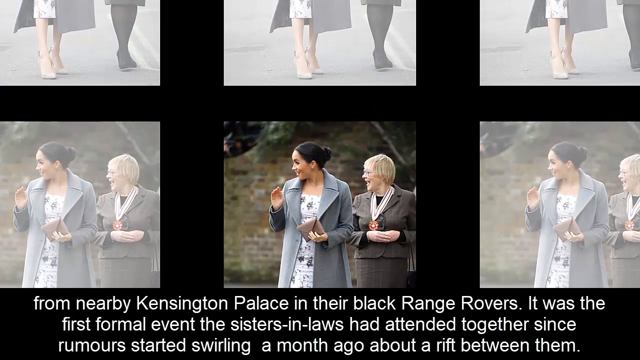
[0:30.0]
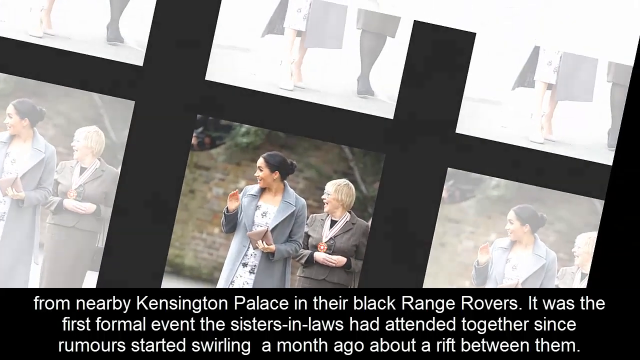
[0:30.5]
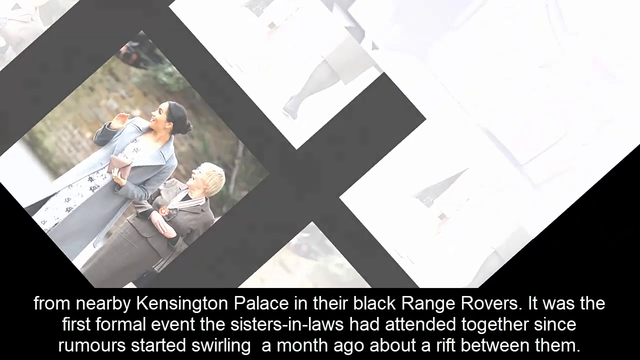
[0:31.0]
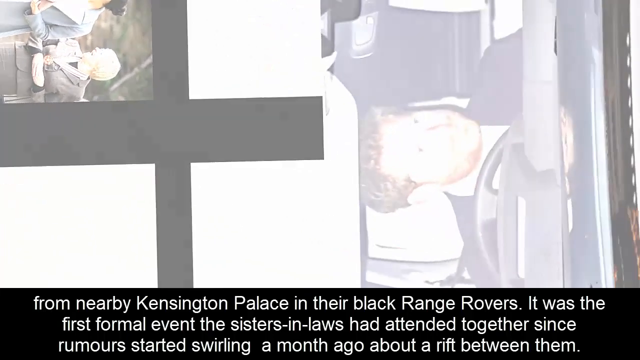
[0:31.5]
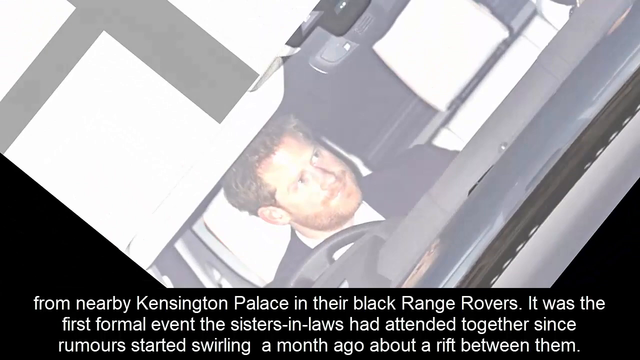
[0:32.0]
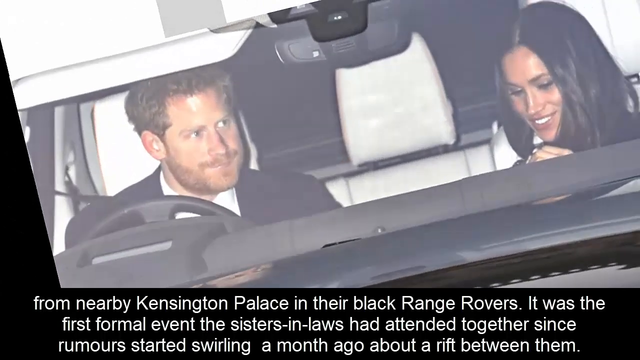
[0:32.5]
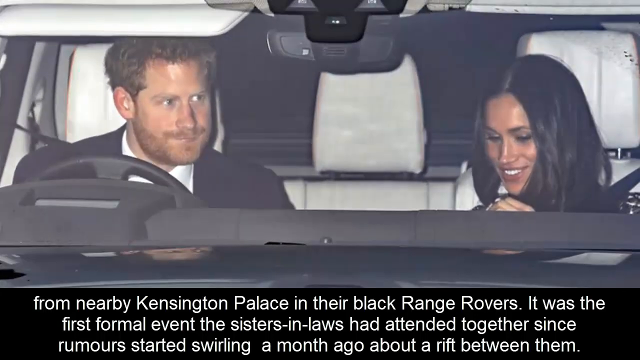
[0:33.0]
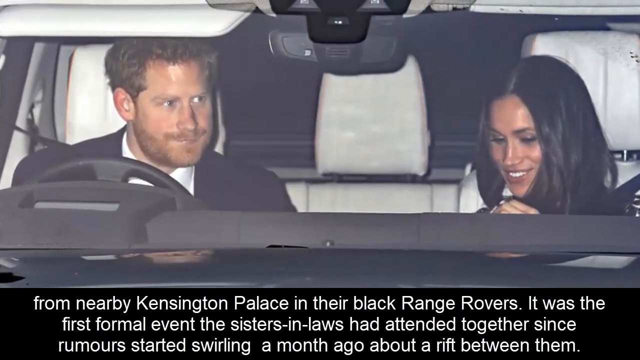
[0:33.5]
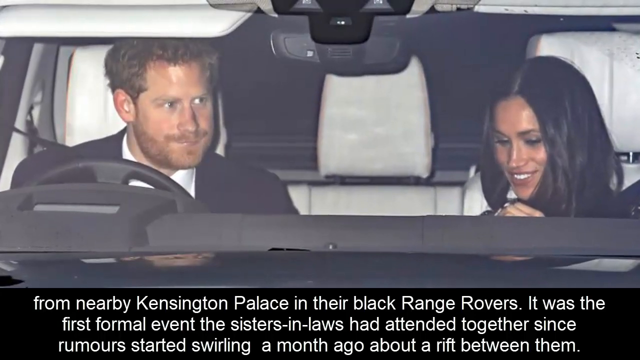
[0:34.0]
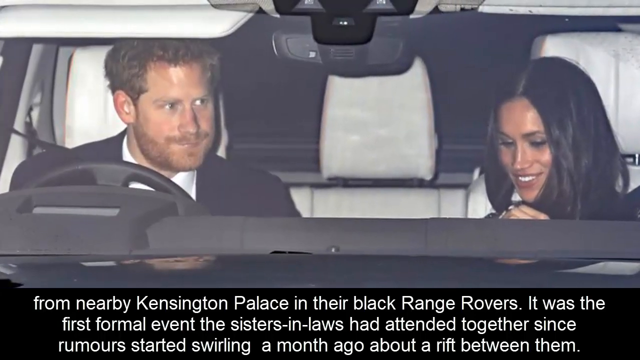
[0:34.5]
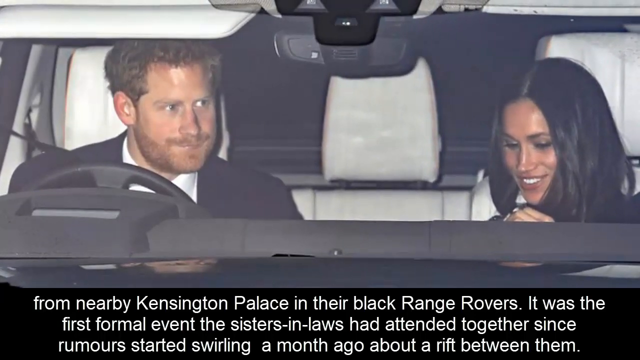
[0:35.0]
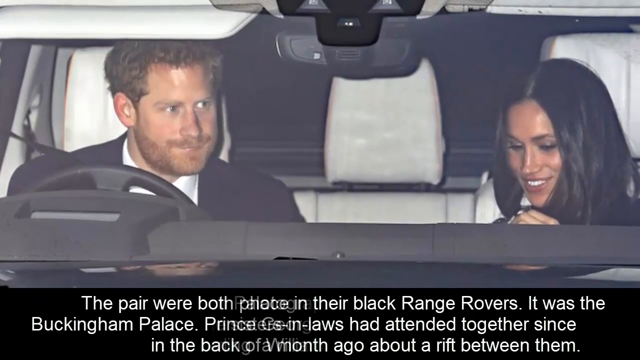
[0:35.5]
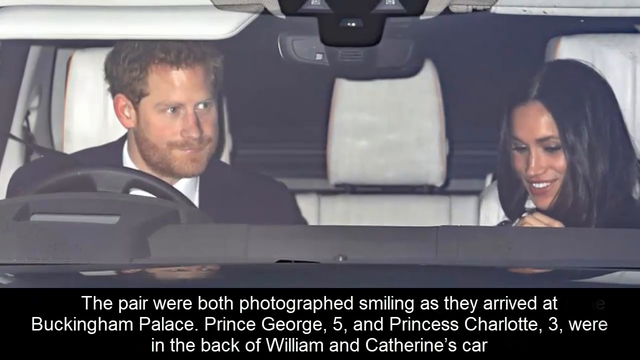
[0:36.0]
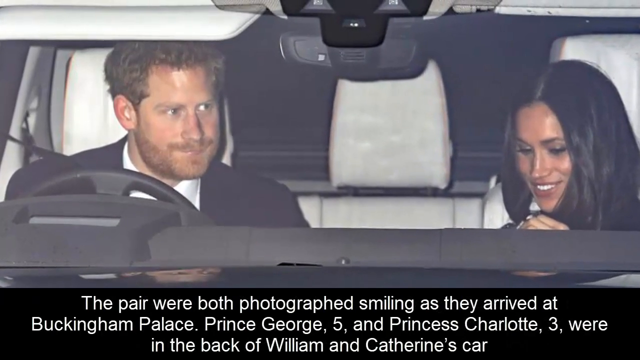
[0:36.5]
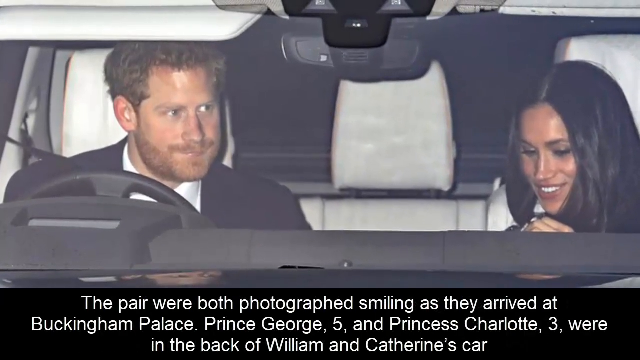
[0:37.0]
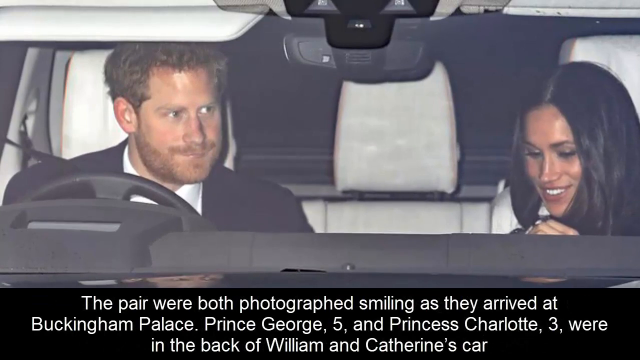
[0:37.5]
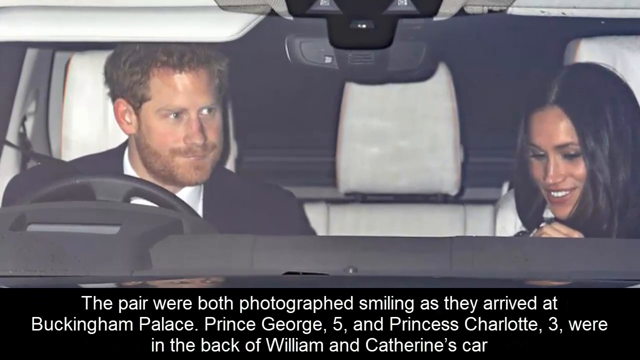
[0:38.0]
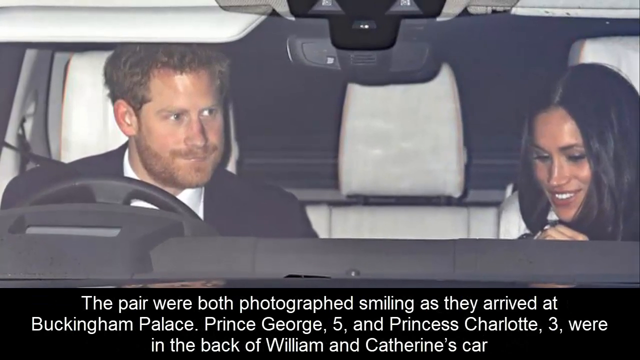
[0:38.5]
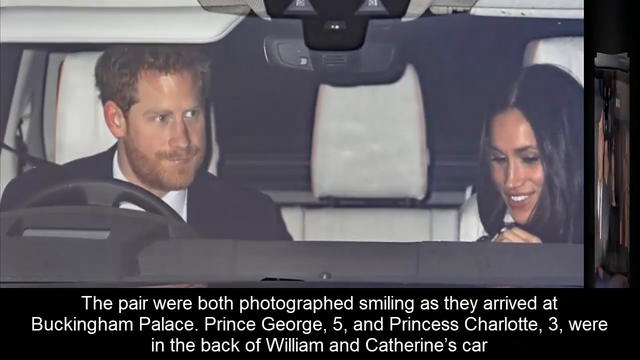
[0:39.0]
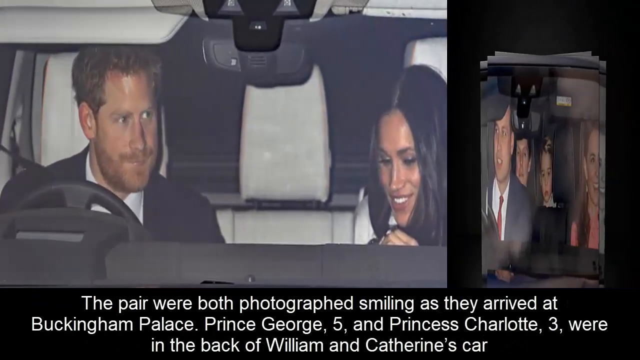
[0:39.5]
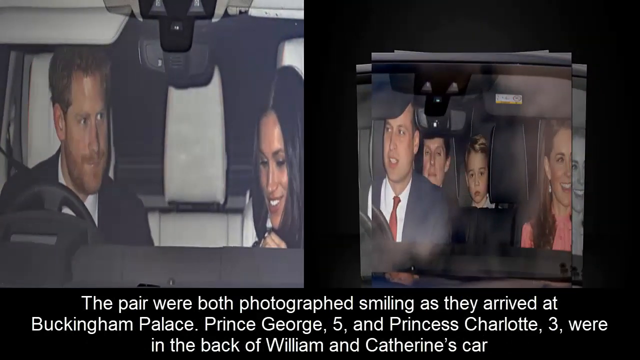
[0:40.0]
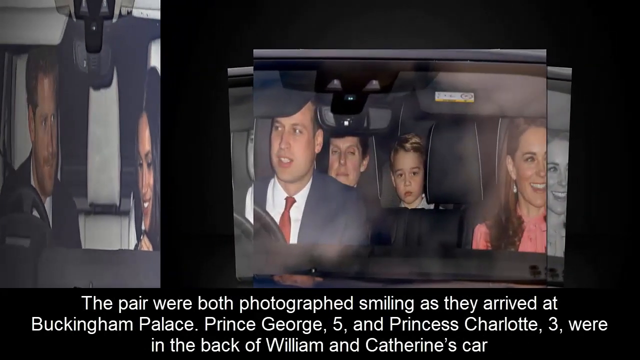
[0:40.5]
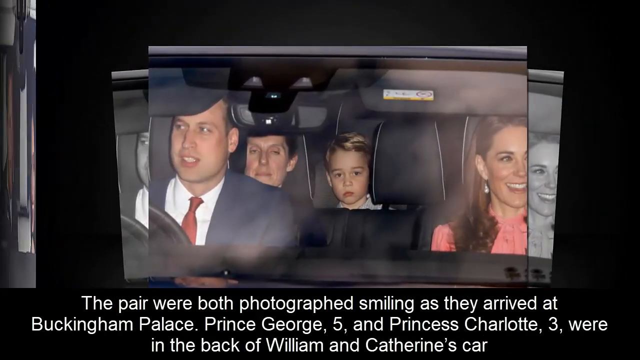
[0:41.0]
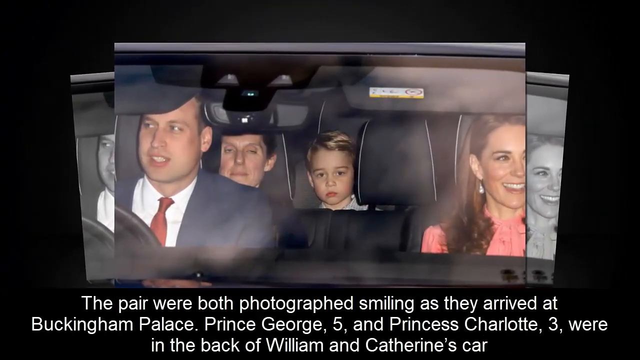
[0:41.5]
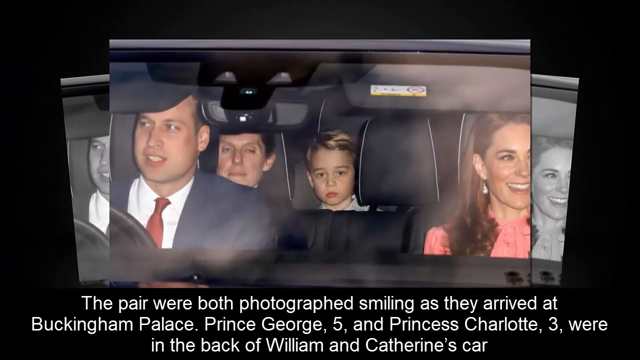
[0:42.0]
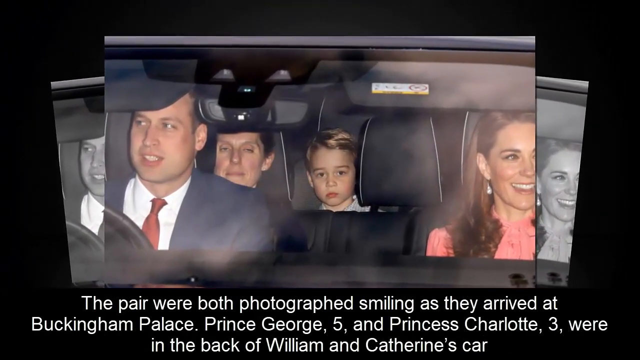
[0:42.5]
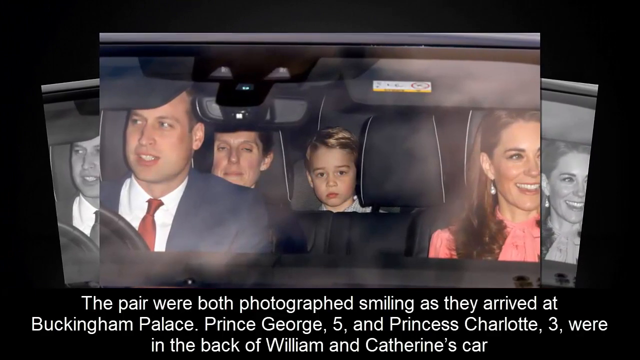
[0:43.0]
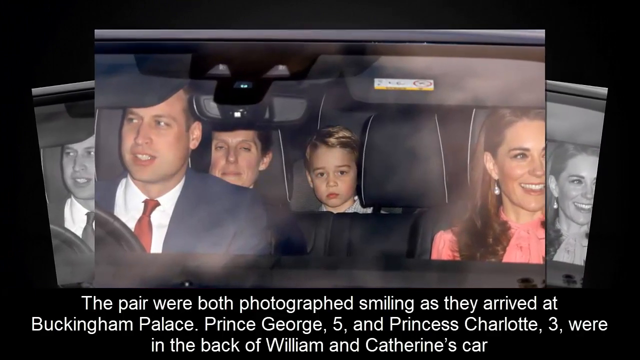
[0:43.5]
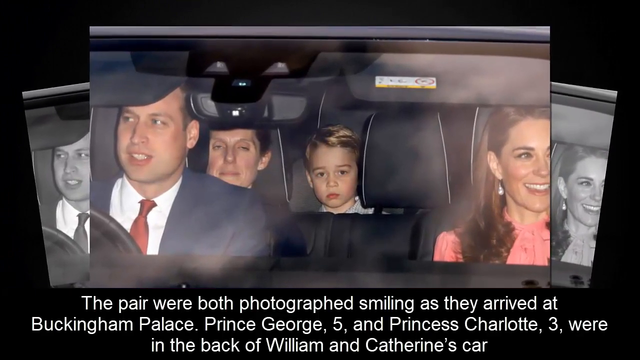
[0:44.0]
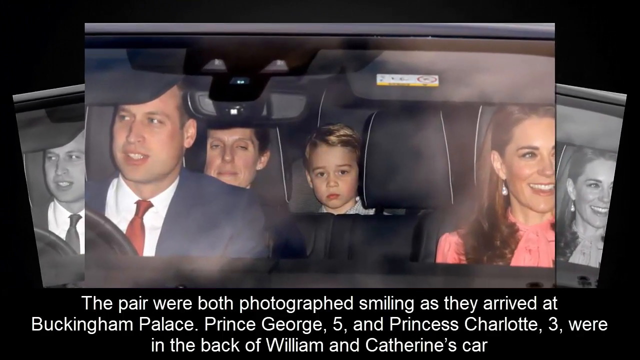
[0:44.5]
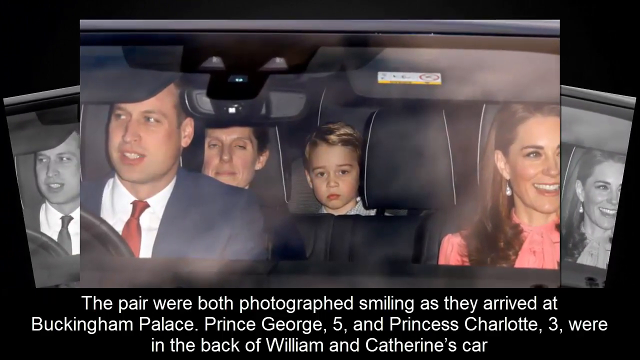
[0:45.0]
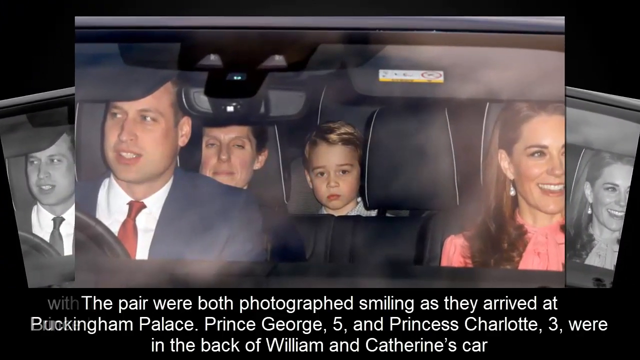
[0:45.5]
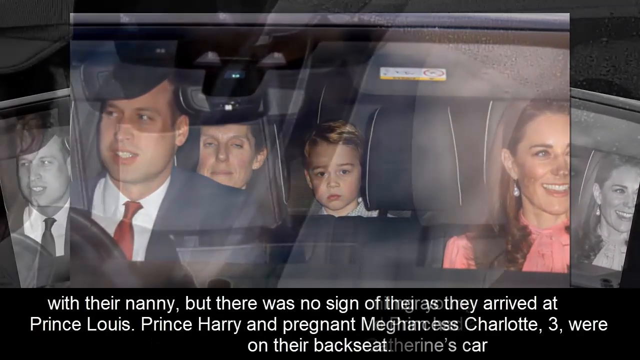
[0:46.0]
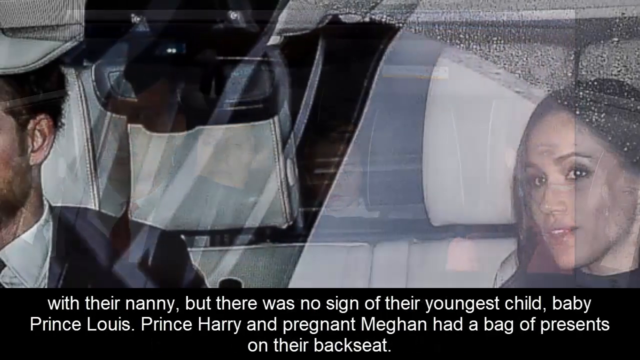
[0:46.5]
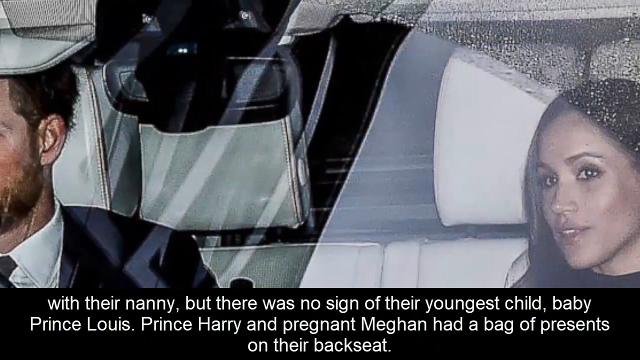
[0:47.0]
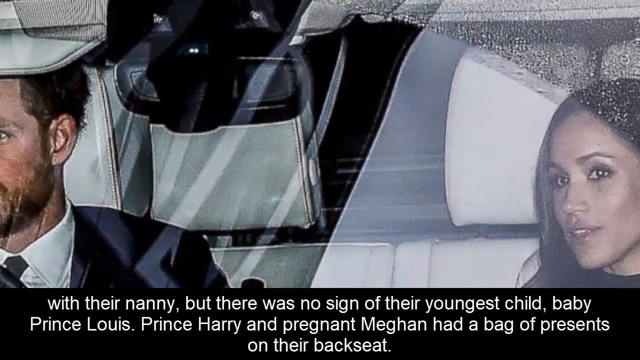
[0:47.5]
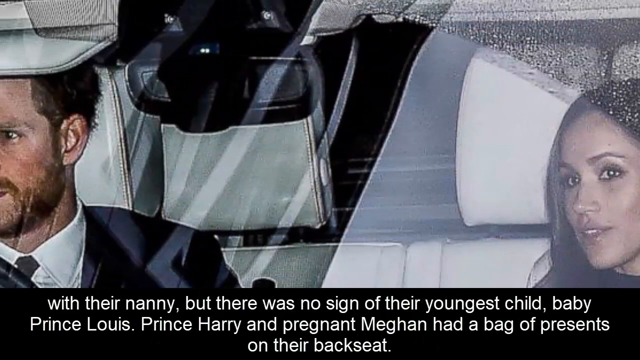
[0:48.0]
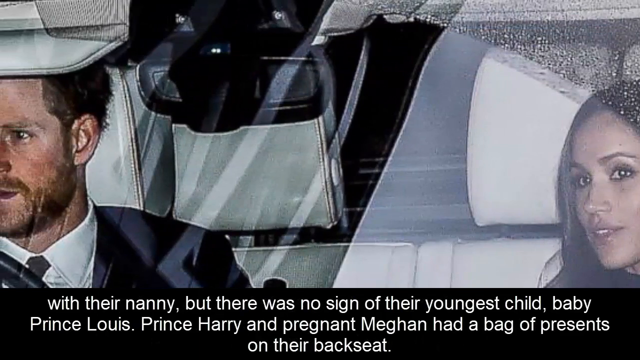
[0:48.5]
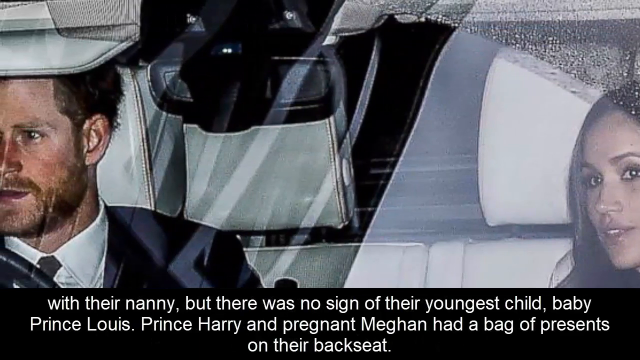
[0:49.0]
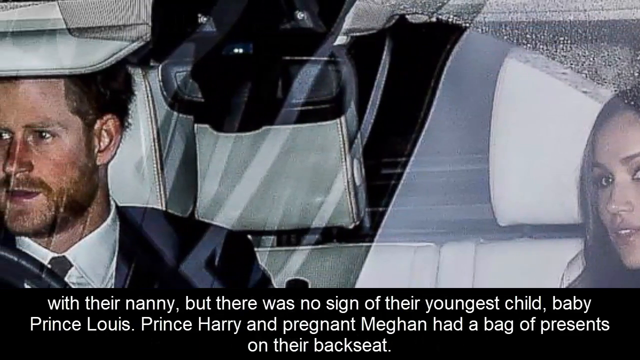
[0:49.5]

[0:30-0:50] The paparazzi images continue, apparently showing one of the women married to the princes. The other images are slightly blurred out in white, and one image shows them looking to the right-hand side as they smile. A passage of text appears below. The image disappears and the video returns to the short clip. Prince Charles appears with his wife, followed by scenes of his brother with his family in the car. A close-up of the paparazzi image of them in the car pans from Meghan to the prince, and a flashlight is visible in his eyes. The camera is panning to the left as the section ends.